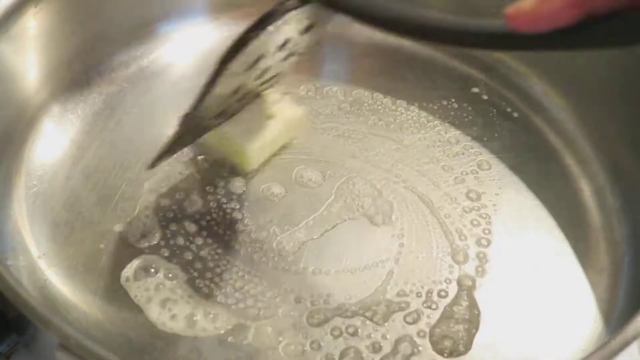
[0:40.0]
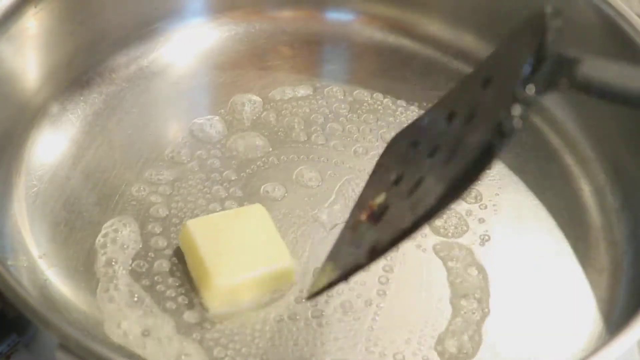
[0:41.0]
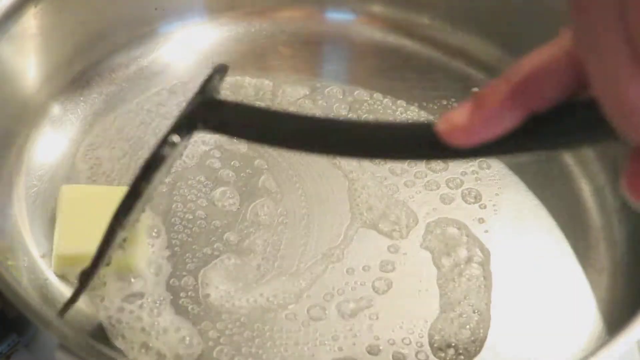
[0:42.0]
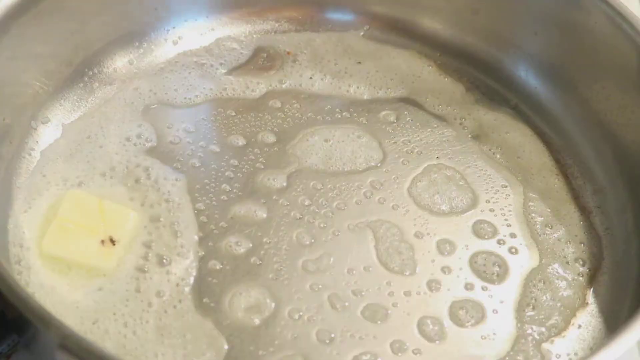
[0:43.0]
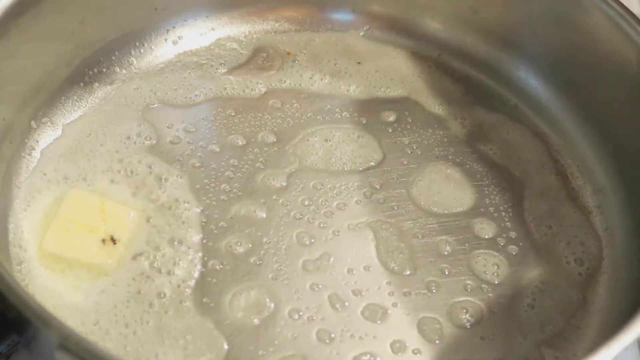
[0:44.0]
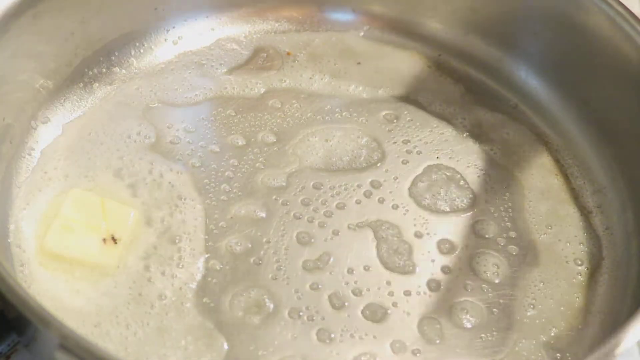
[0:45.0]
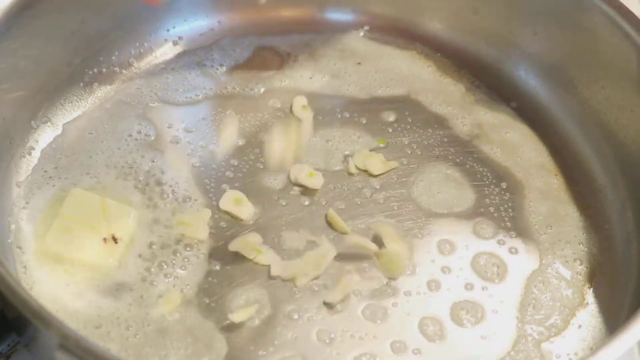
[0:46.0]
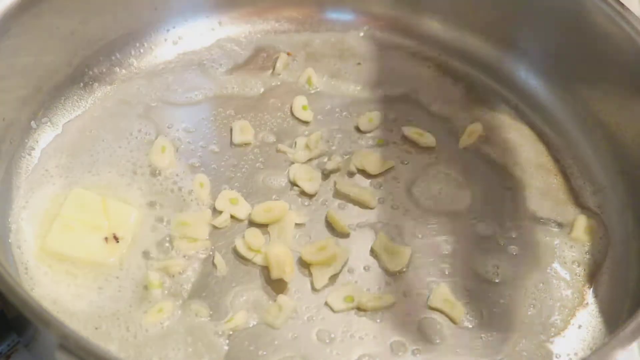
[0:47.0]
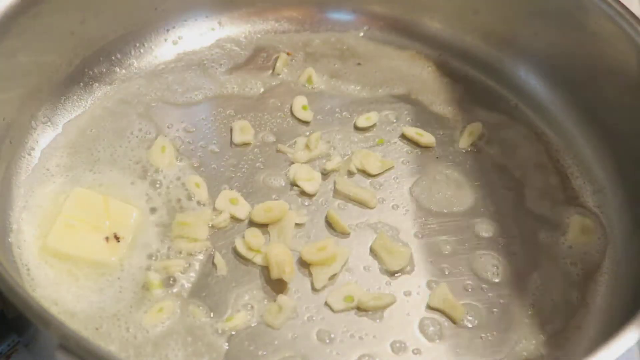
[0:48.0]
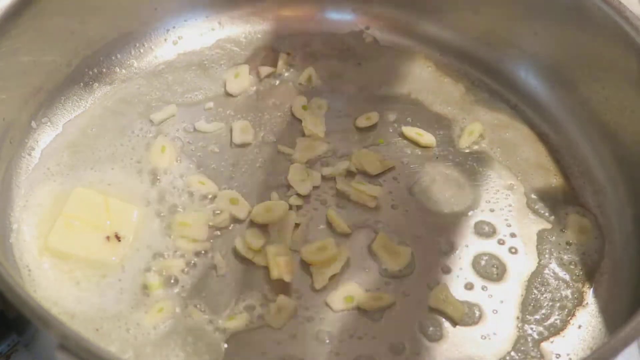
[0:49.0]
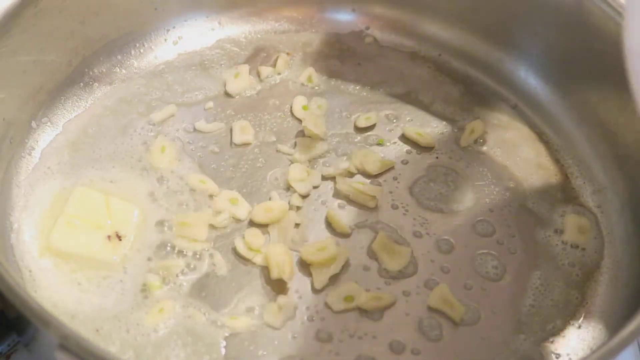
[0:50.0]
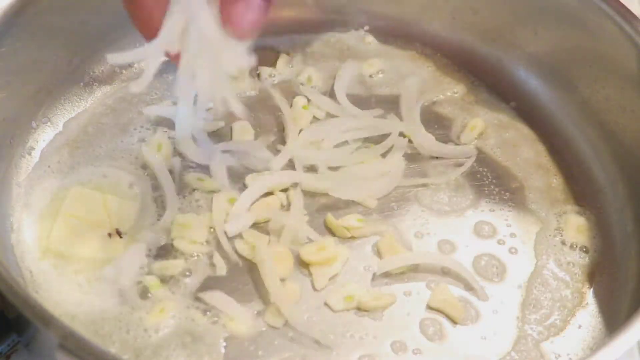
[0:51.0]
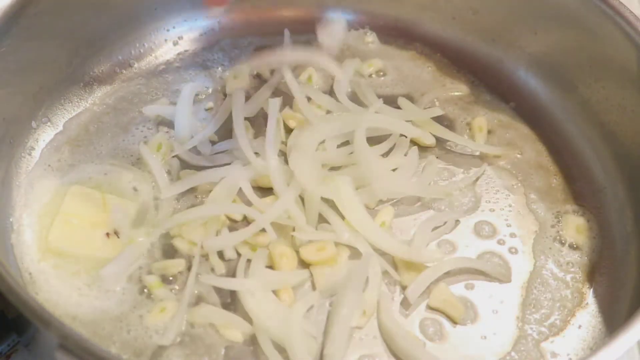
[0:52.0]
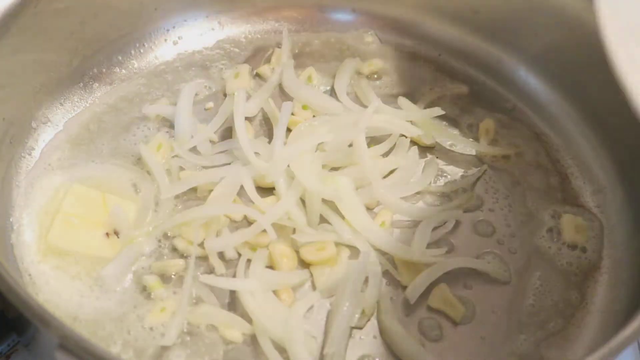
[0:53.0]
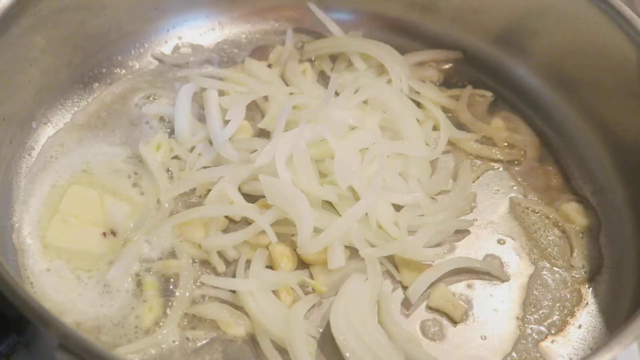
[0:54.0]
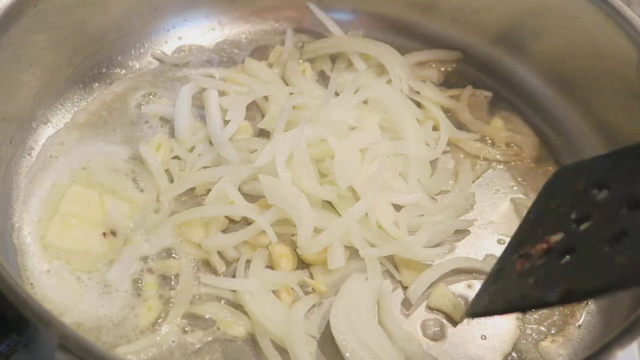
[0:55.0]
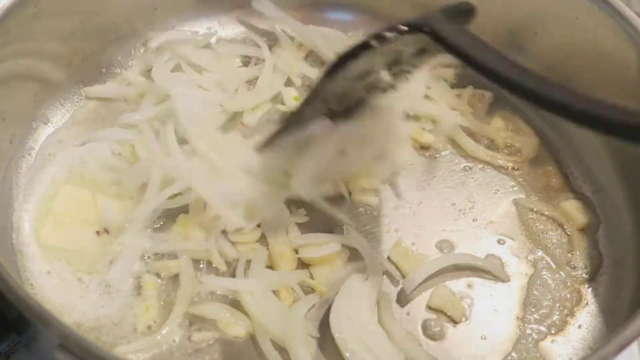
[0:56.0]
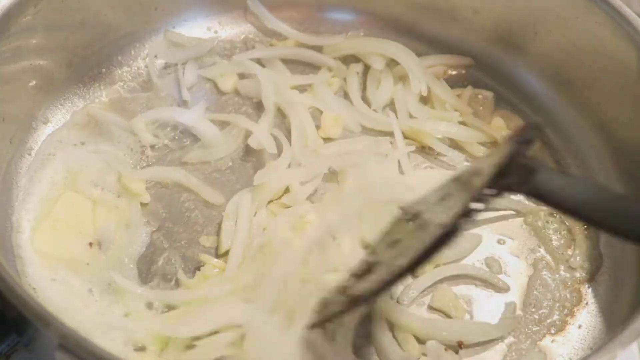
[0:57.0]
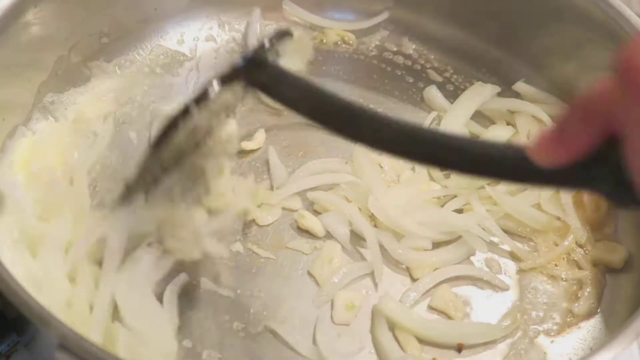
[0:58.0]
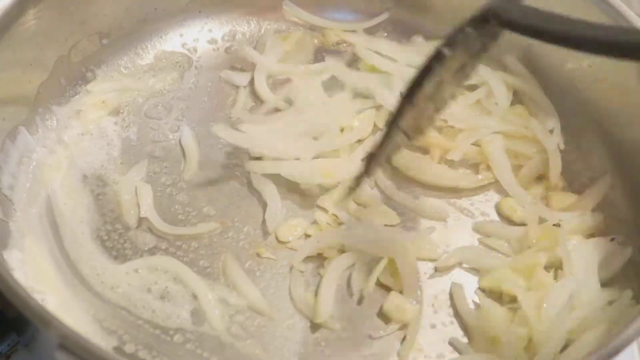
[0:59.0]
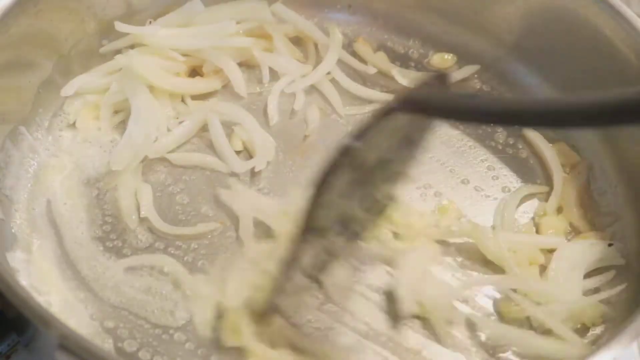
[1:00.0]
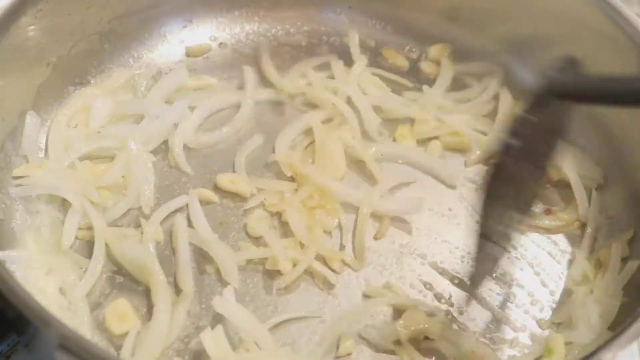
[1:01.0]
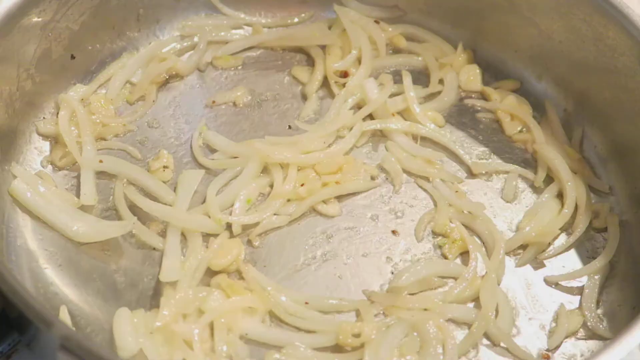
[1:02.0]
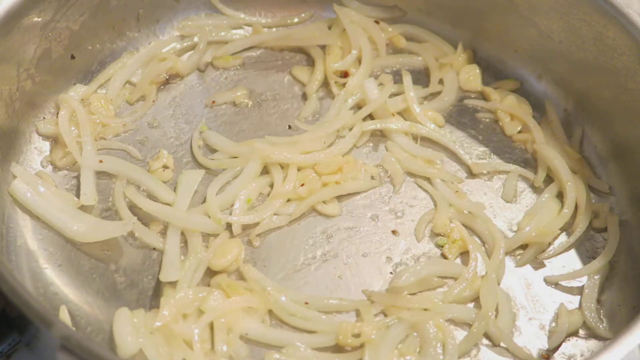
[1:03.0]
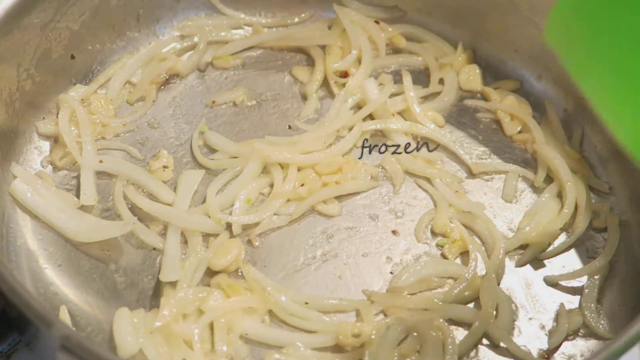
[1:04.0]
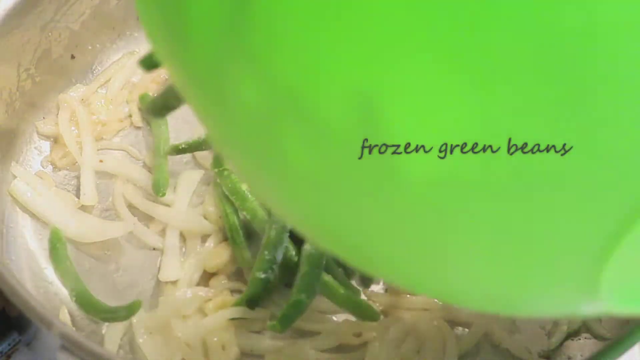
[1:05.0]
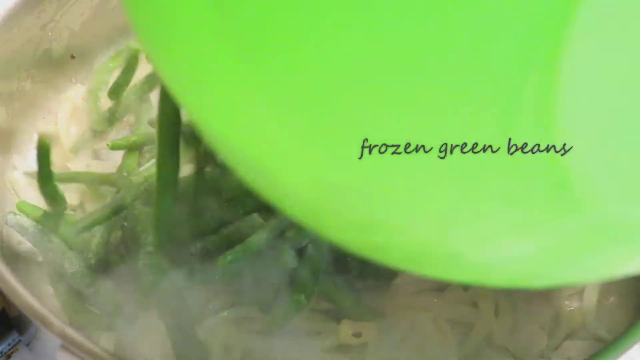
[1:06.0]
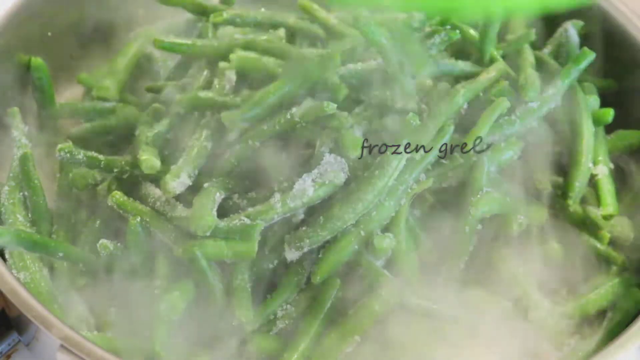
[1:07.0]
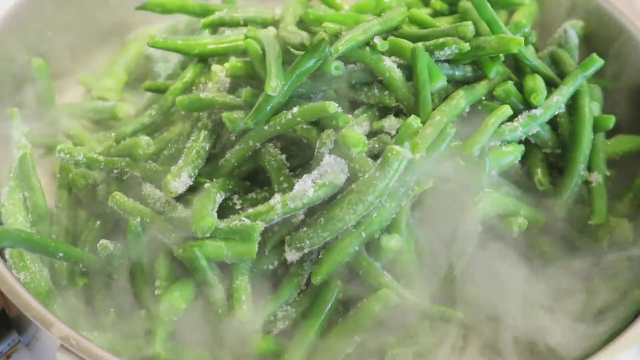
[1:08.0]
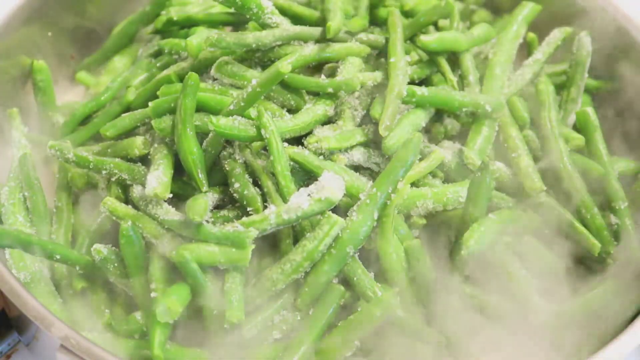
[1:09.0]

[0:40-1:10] The chopped nuts cook with oil. Butter is put in a silver pan, then garlic and onions are added to the pan and mixed. Frozen green beans are then added to the pan.